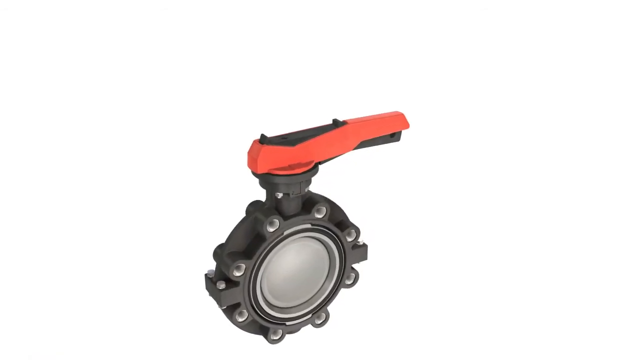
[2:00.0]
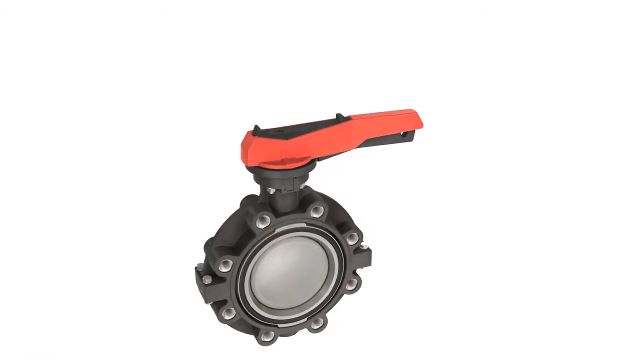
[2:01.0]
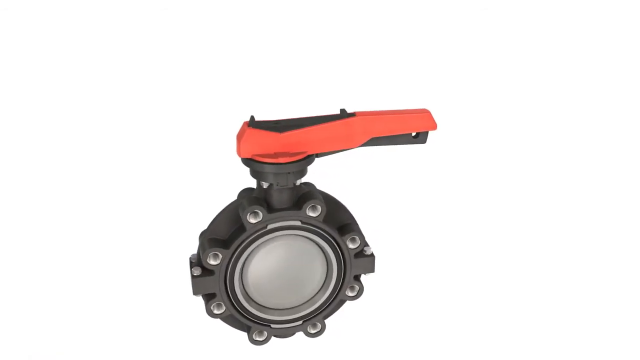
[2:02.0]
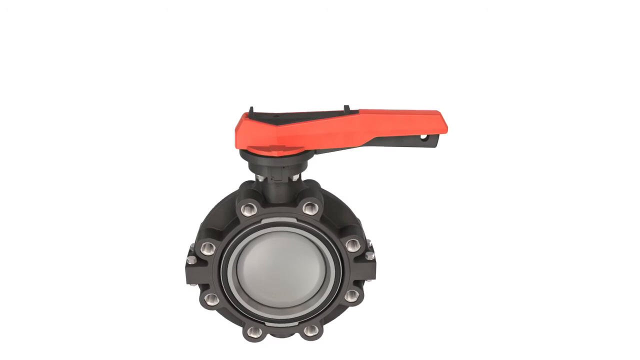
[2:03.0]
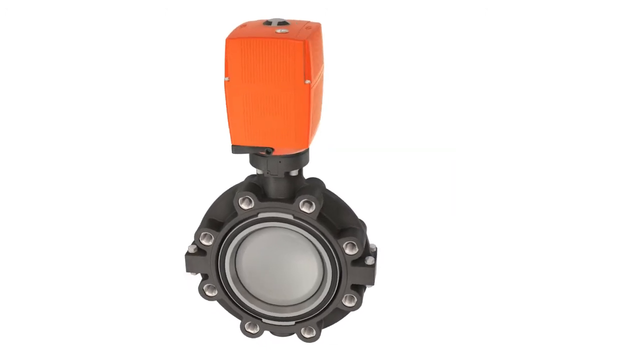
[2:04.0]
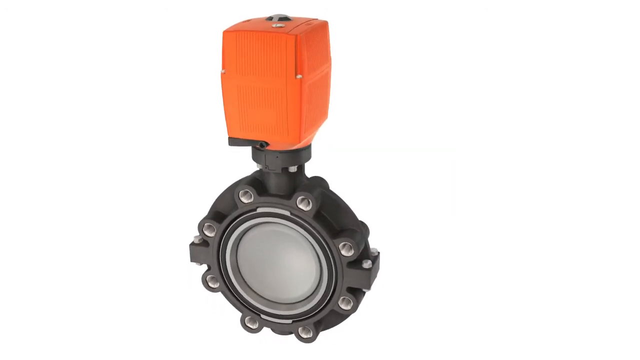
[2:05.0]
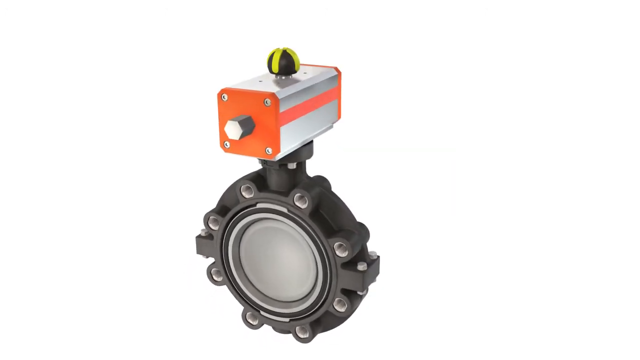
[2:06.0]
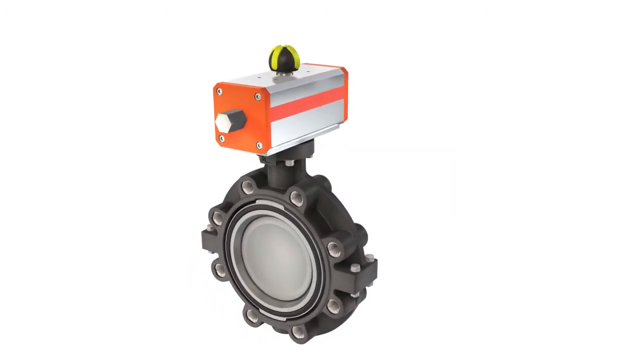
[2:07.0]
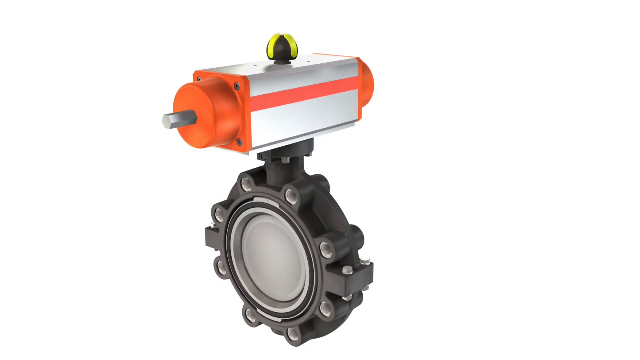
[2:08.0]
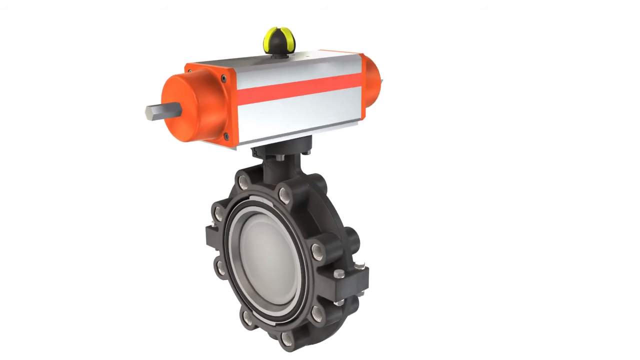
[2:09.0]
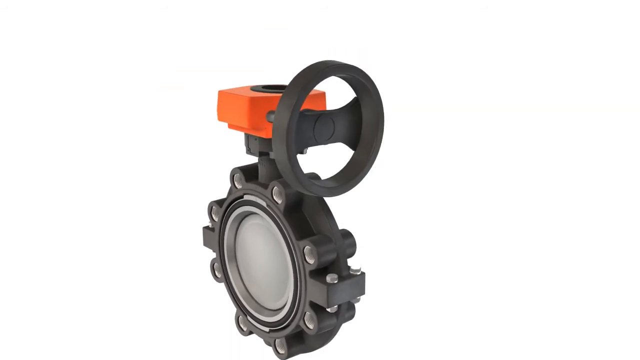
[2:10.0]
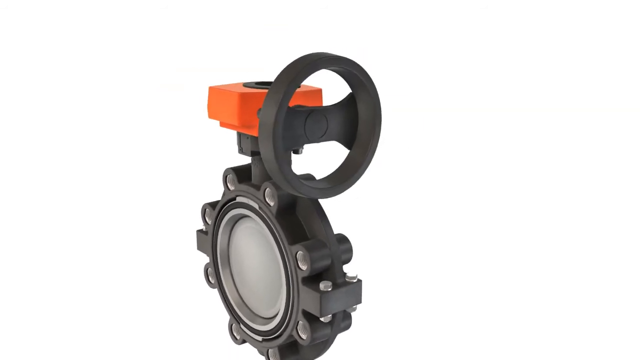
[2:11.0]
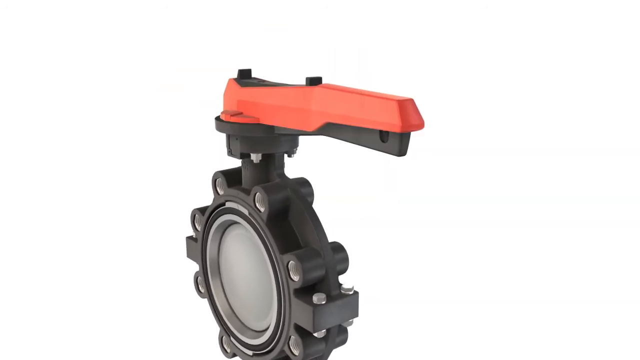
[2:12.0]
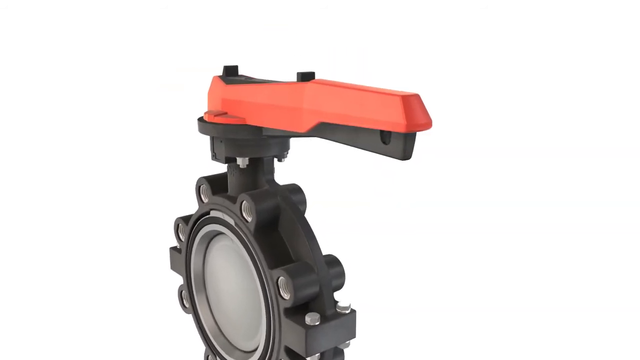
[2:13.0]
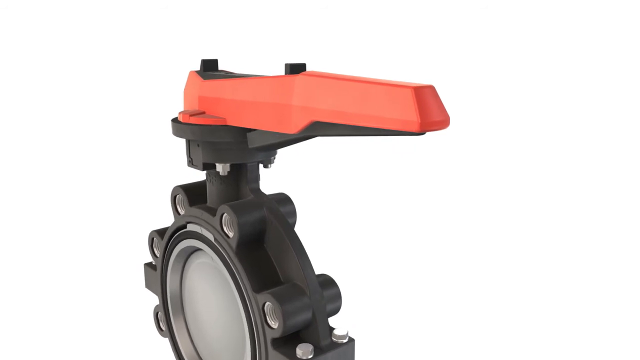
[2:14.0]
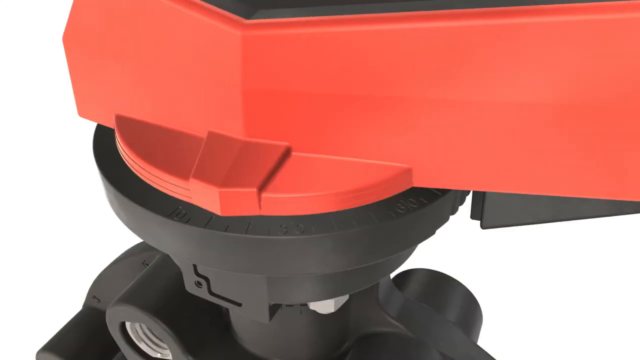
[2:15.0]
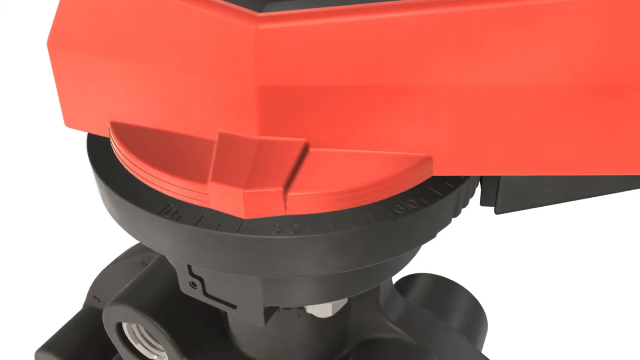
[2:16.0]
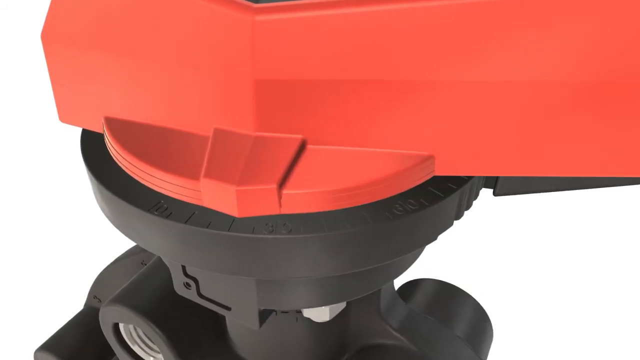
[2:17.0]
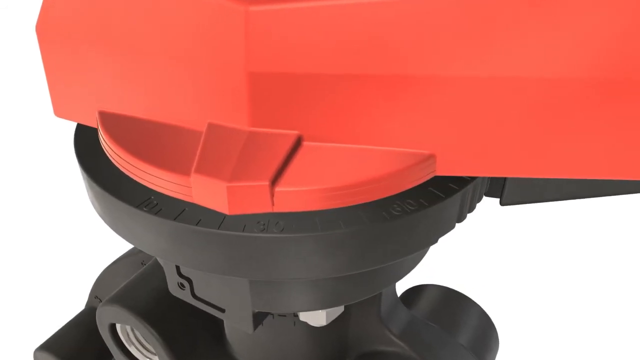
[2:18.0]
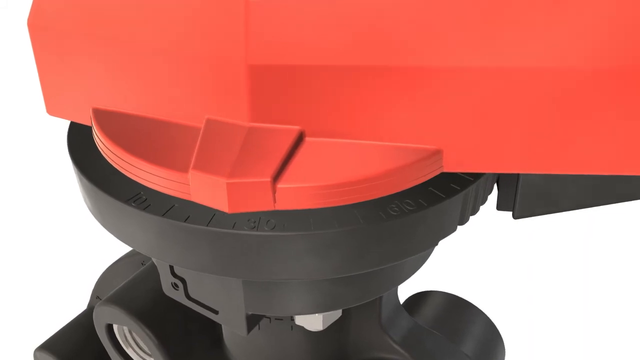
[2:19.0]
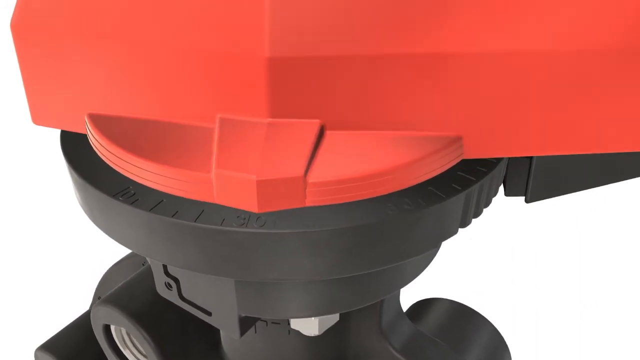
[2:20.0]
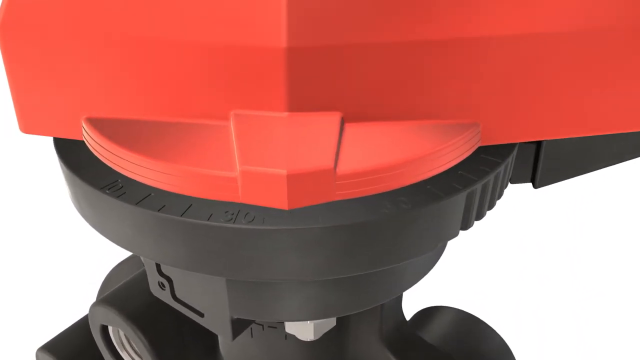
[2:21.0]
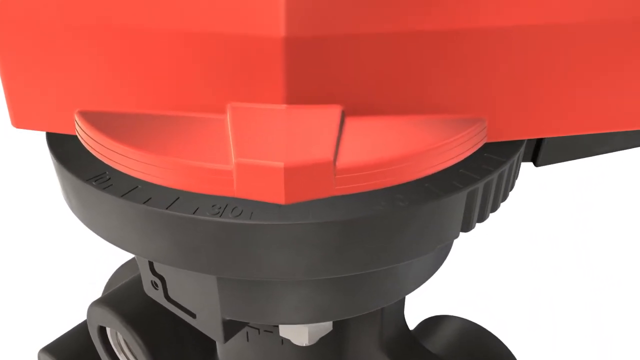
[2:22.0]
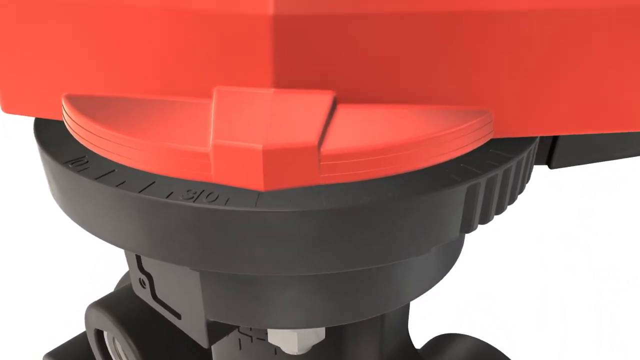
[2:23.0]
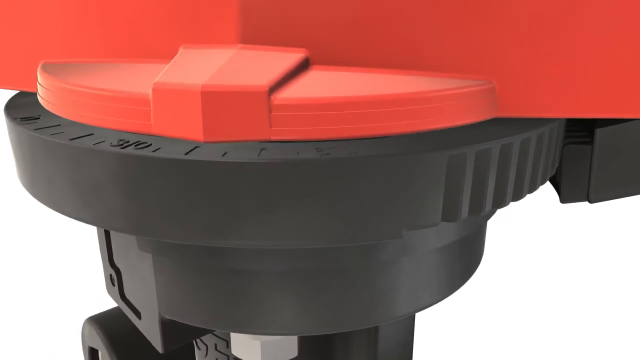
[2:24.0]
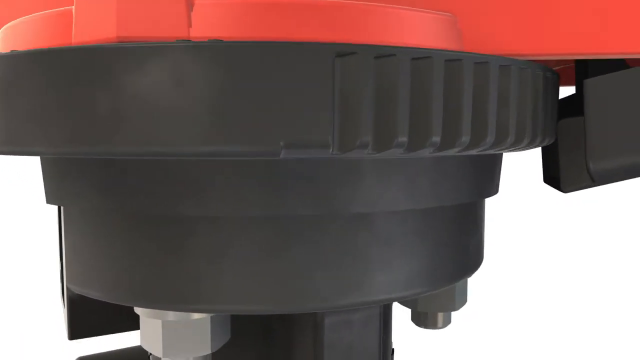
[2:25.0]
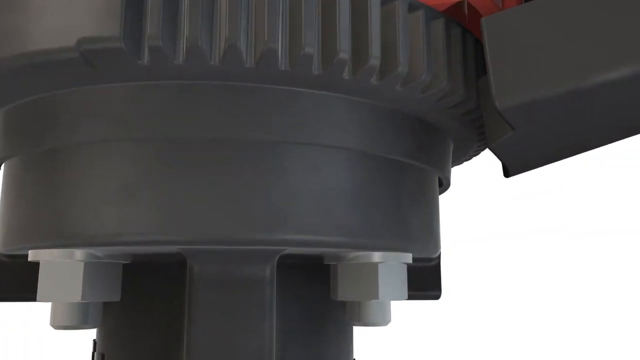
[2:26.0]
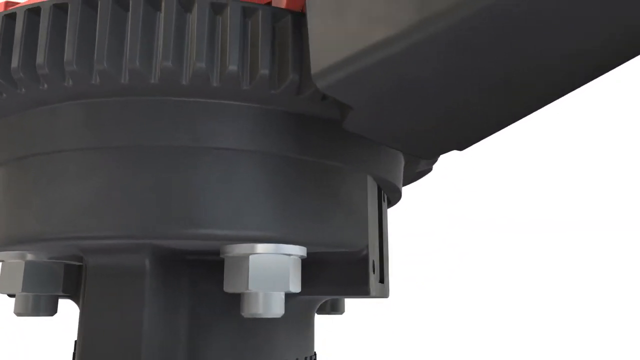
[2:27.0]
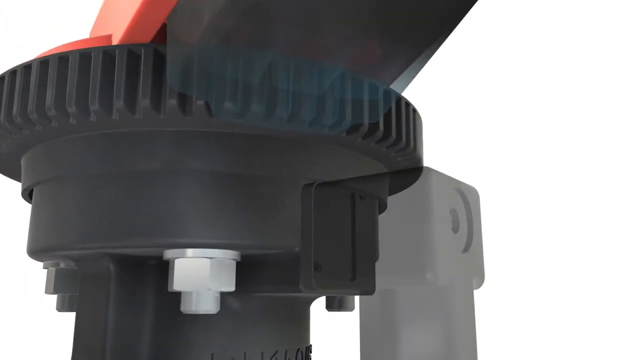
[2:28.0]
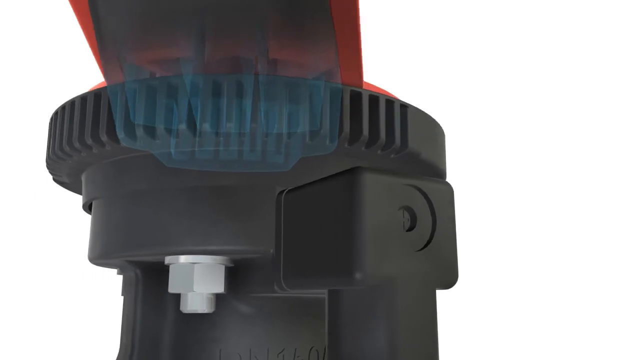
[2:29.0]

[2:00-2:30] The view moves around the device from left to right, so the device looks like it is turning clockwise. The red handle is on top, and it looks like a section that, if lifted, would reveal a black handle underneath. It then changes to an orange 3D device plugged on top of the black circular cylinder, then to a flatter rectangular one with a silver screw on the edge and a green and black knob on top. It changes again to one with a silver outer edge, and then to one with a black circle that looks like a steering wheel on one side. The original red handle returns, swivelling on the circular mechanism beneath it. Indented lines and markers read 0, 30 and 60, with other measurements in between, and the red handle moves along these, changing its angle. The view then goes to the underside of the handle.